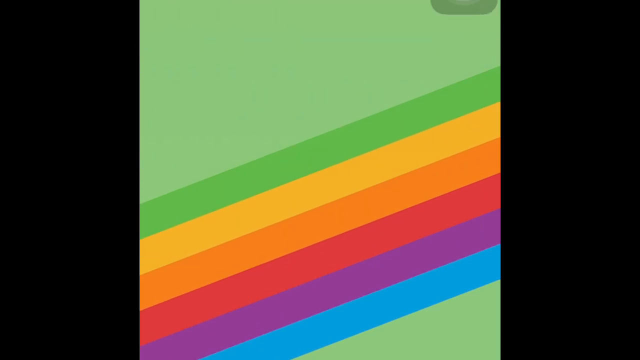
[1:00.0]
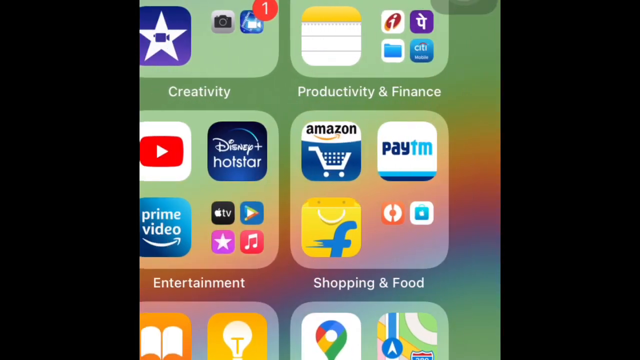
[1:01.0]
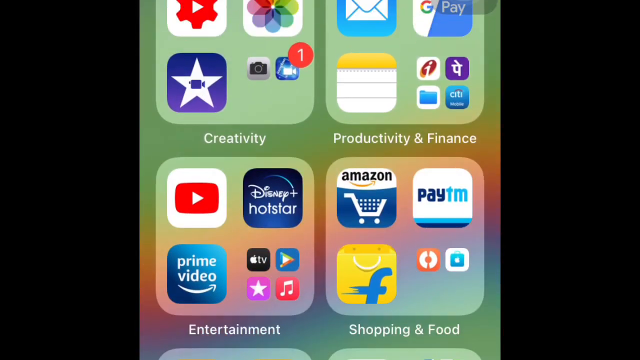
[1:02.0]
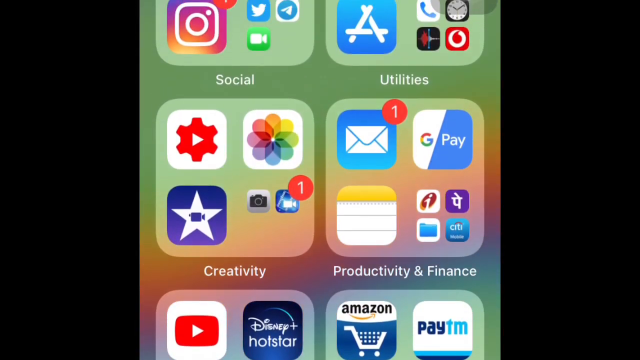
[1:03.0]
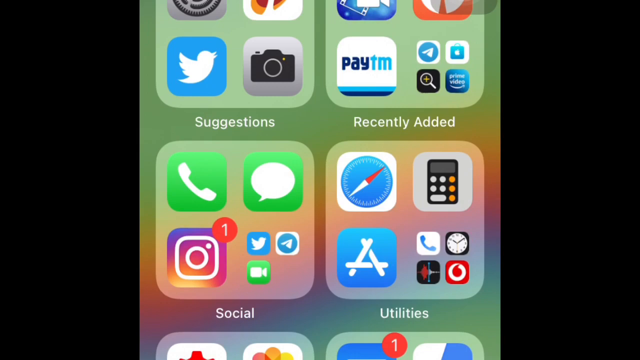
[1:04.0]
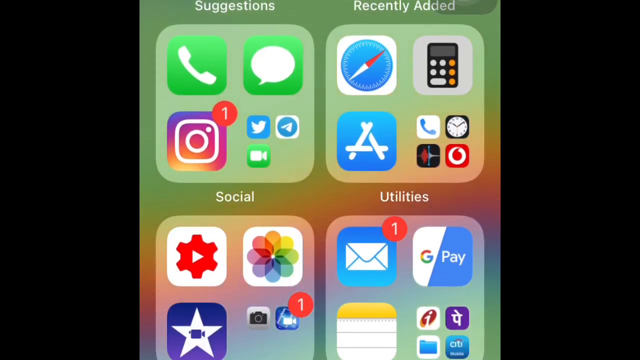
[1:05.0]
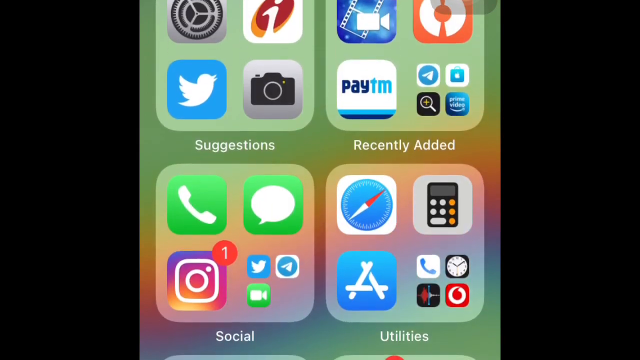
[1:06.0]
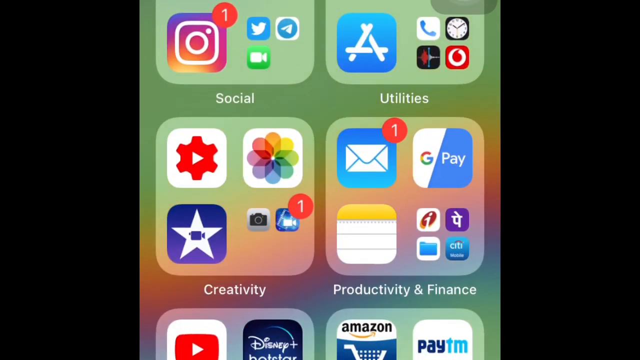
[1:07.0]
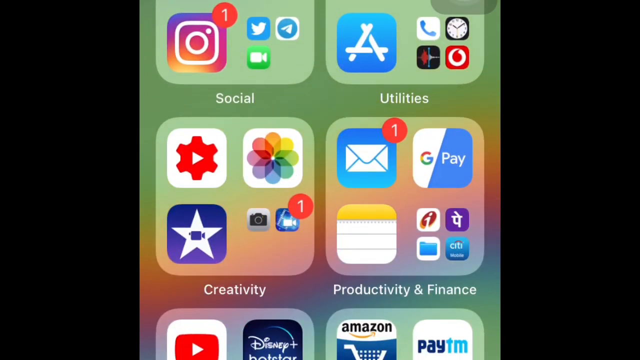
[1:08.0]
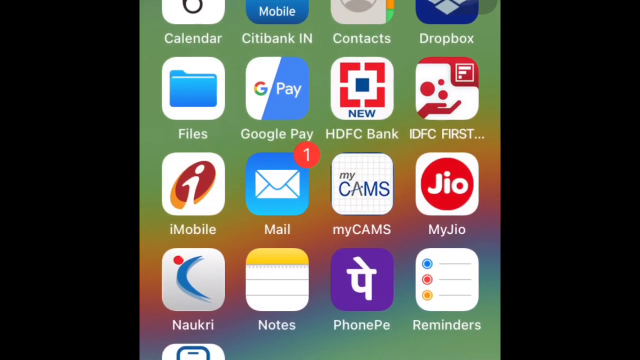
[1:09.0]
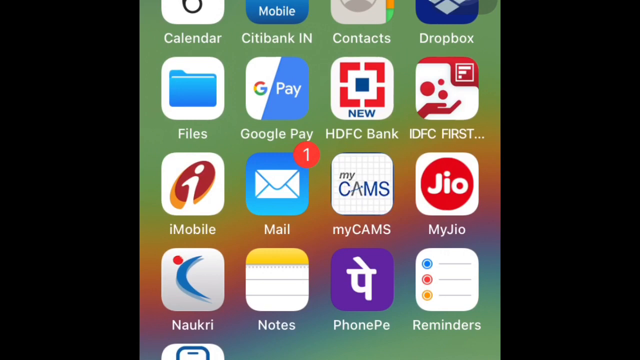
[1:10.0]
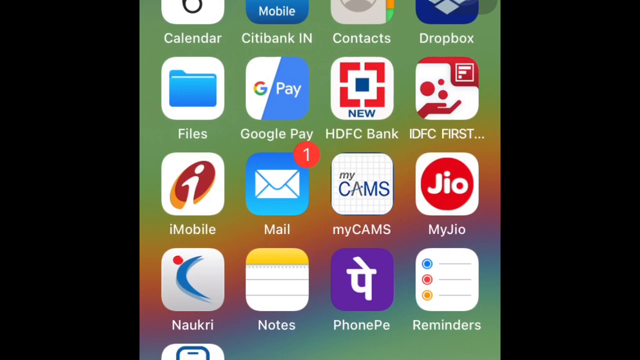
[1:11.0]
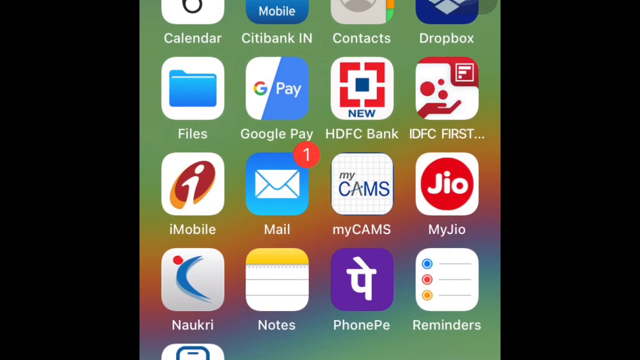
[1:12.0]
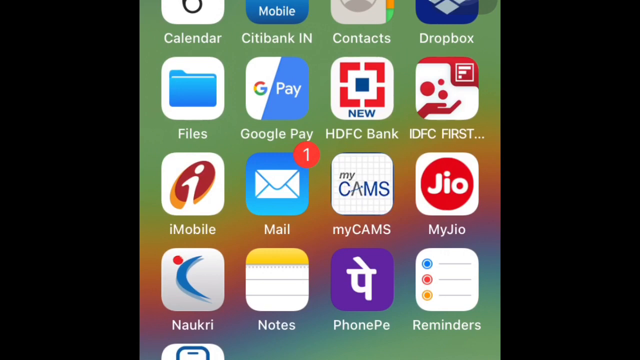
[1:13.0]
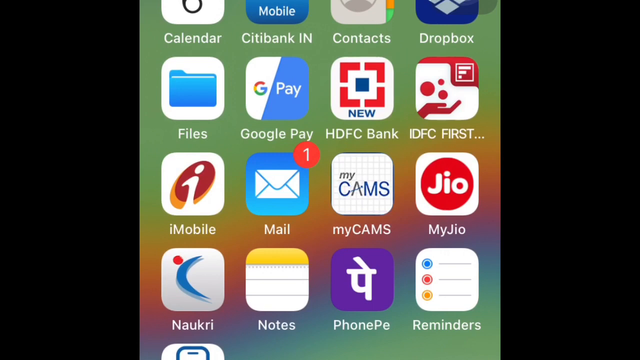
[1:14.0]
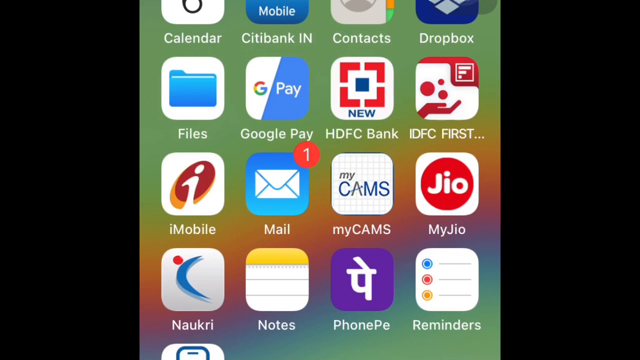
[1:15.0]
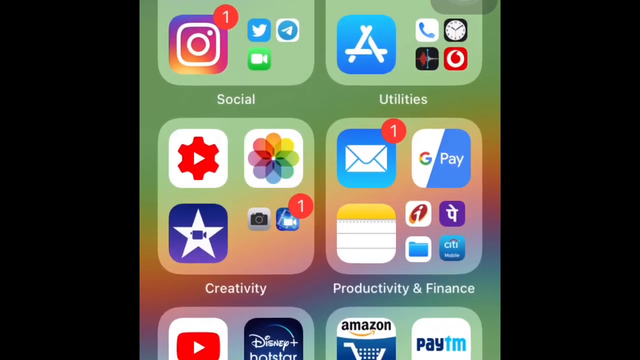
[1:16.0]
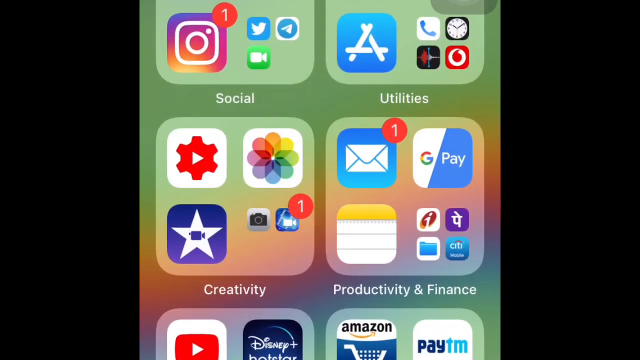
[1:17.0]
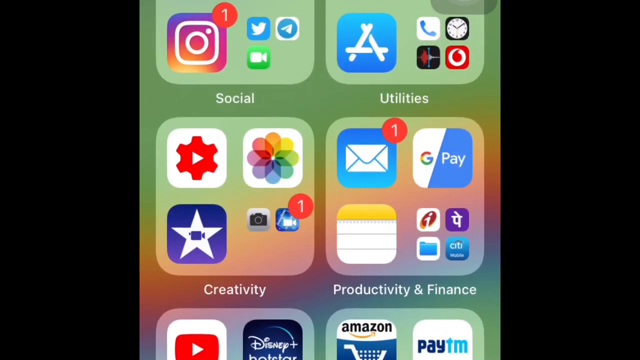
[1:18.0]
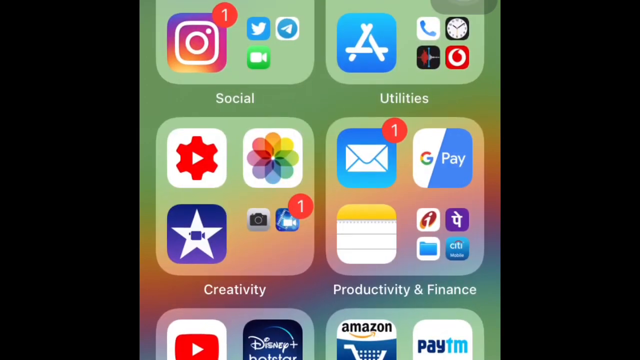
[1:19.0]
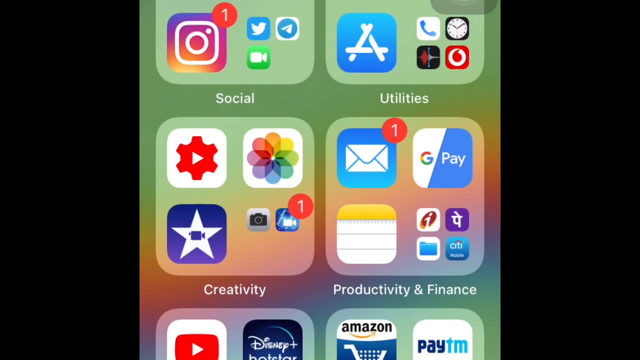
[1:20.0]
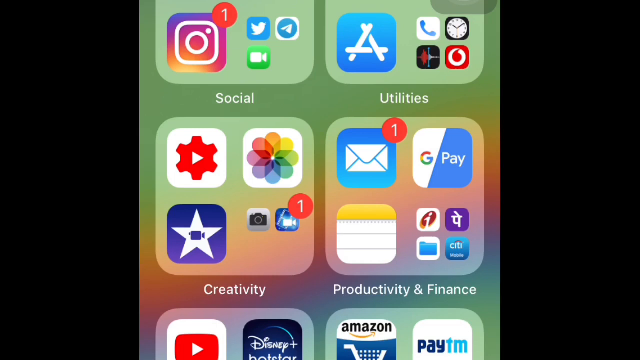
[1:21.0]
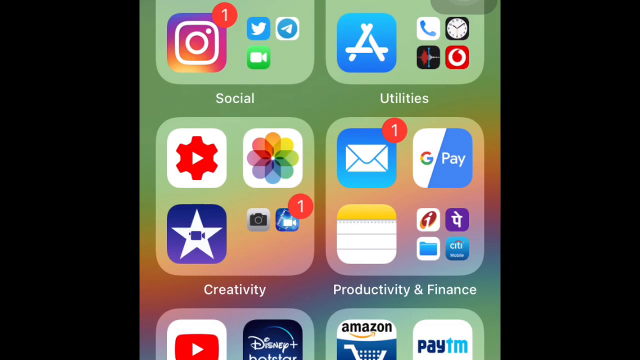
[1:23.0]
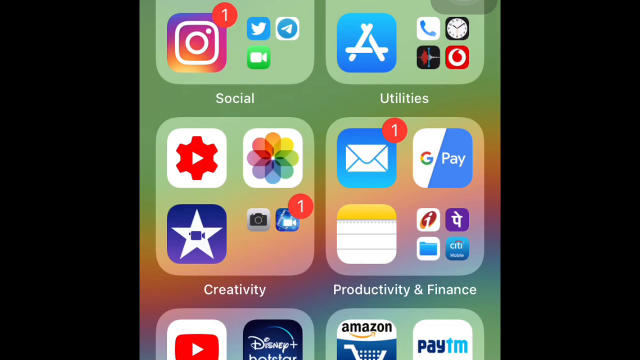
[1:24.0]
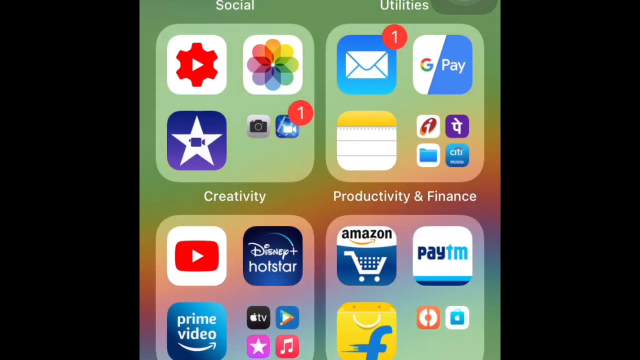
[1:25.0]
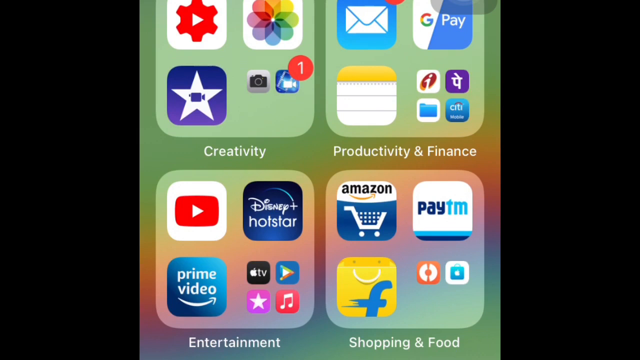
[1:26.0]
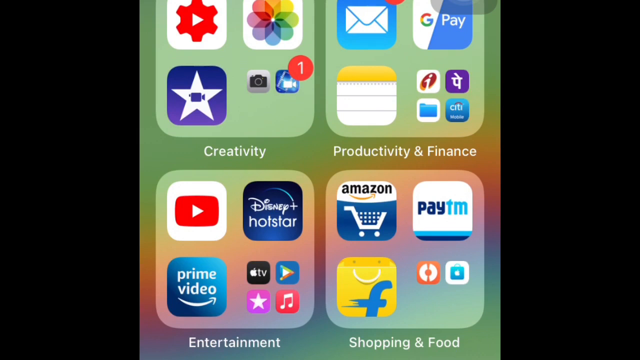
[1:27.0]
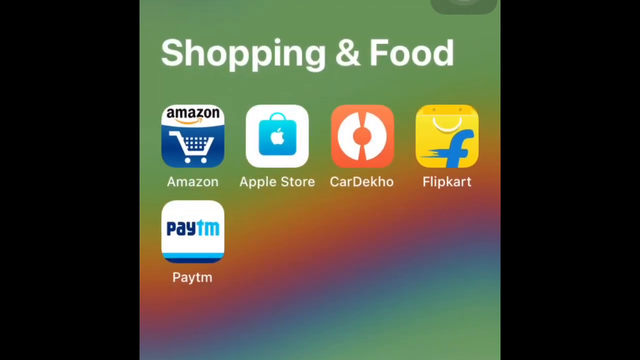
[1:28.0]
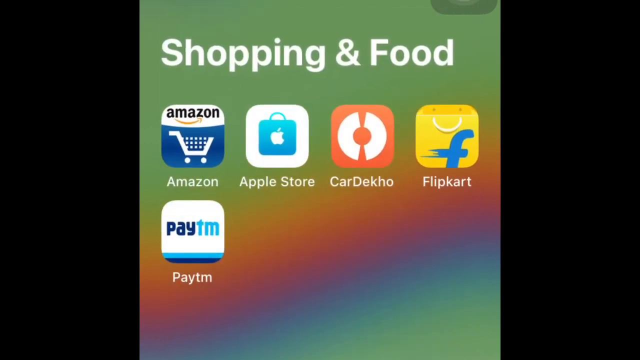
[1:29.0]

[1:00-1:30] The view scrolls to the right one more time. At the top, the bottoms of two squares are visible. The left one has a big icon that looks like a star with a movie camera in it; to the right is a camera, and another little blue icon with a red circle containing a one. Beneath it is the word "creativity". On the right side is "productivity and finance", with a little calendar on the left and four smaller apps to its right. Below those on the left is "entertainment", with a YouTube icon above, Disney to its right, Prime below, and four smaller apps to the right of Prime. There is also "shopping and food", with Amazon, Paytm, a yellow bag with an F on it, a blue icon, and two smaller icons. At the bottom, the top edges of two more sections show two icons each. The view starts to scroll right but instead scrolls up, showing "utility", "social", "recently added" and "suggestions", all with icons in them. One is clicked open, showing icons four across and four down, including banks and Google Pay, in the finance section. It closes back into the productivity and finance section, the view scrolls down a little, and shopping and food is clicked, pulling up four icons across the top and more on the bottom.